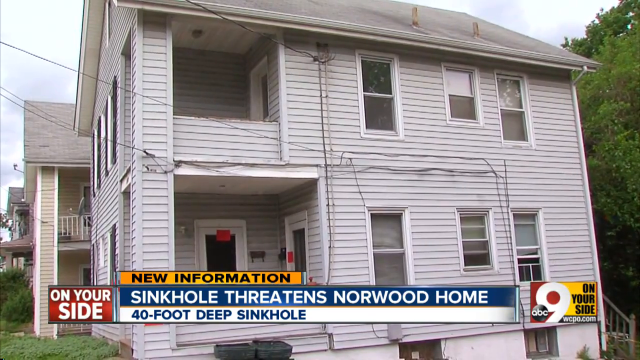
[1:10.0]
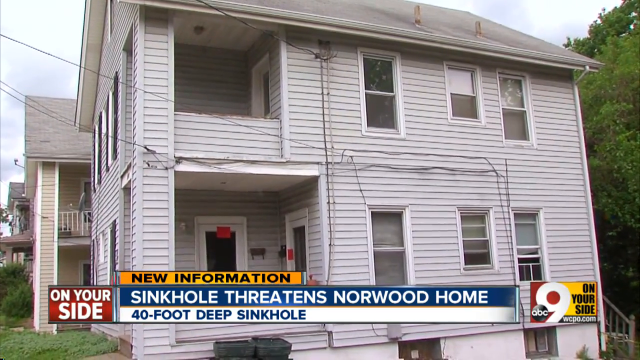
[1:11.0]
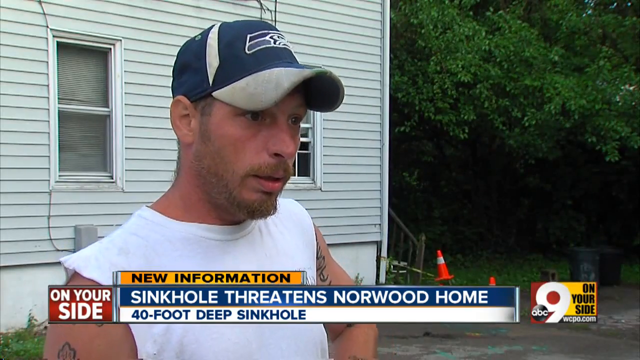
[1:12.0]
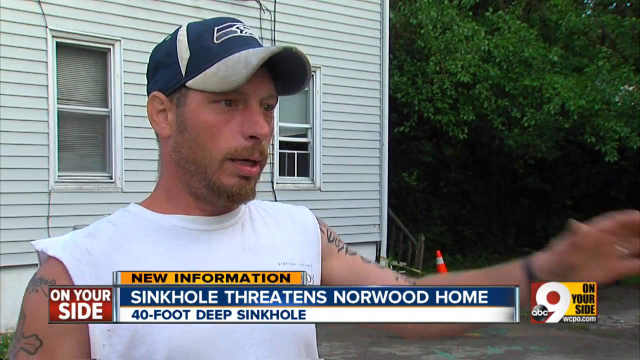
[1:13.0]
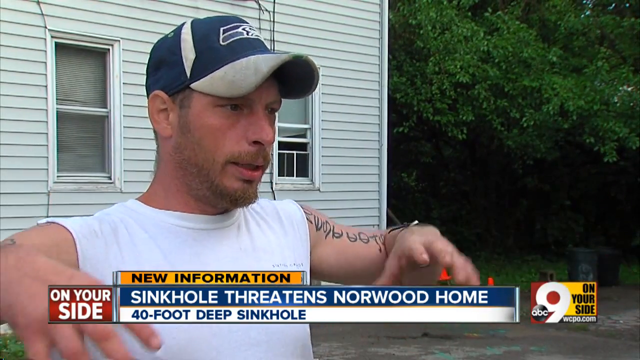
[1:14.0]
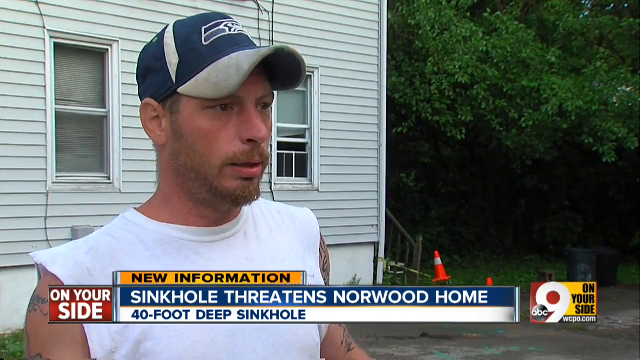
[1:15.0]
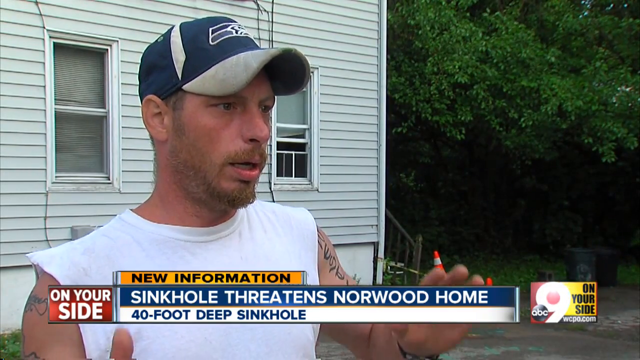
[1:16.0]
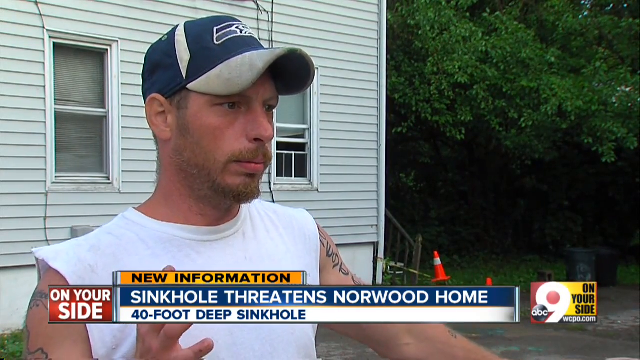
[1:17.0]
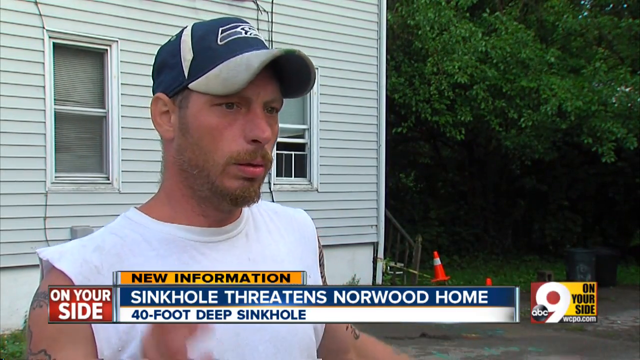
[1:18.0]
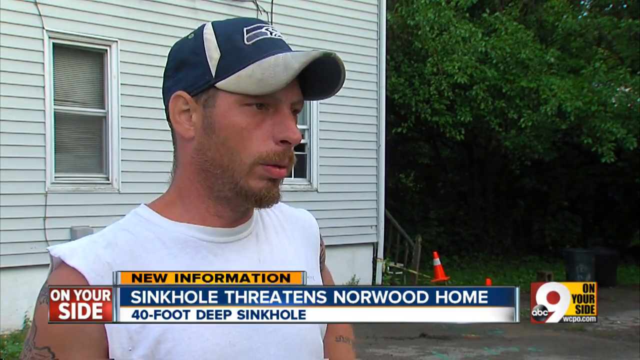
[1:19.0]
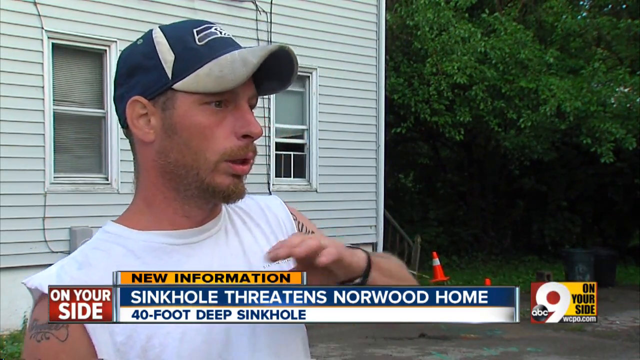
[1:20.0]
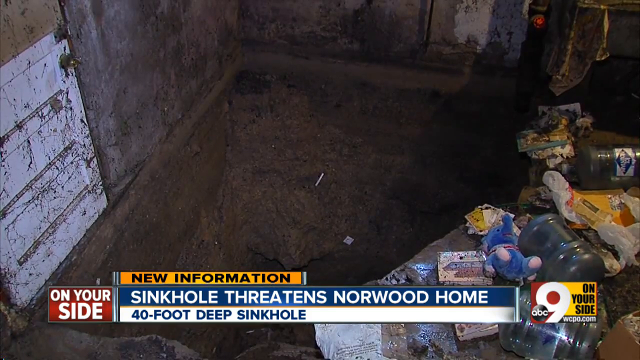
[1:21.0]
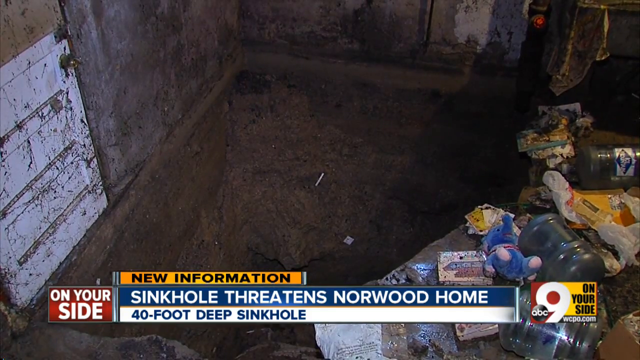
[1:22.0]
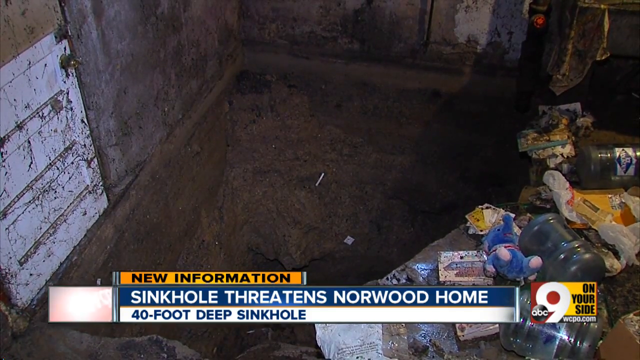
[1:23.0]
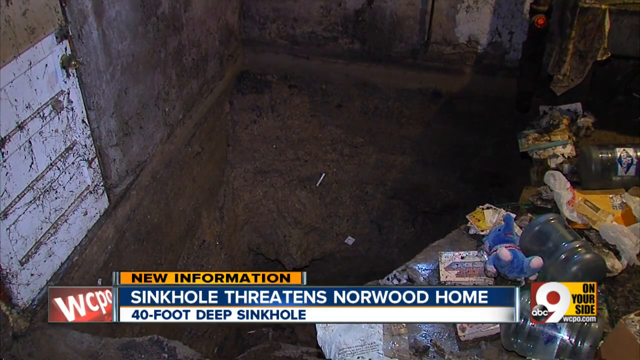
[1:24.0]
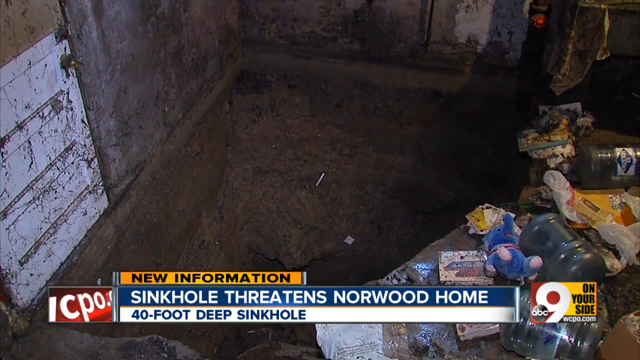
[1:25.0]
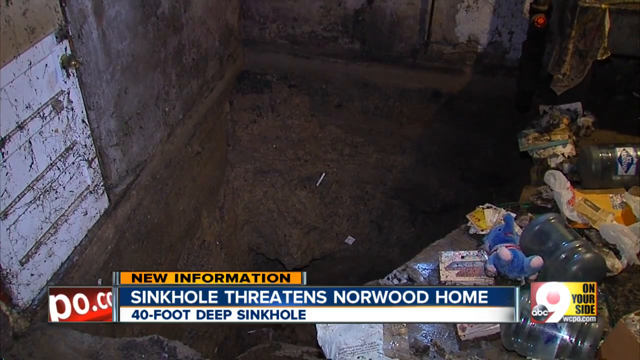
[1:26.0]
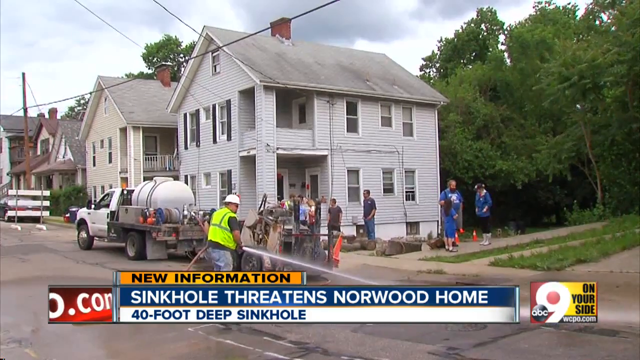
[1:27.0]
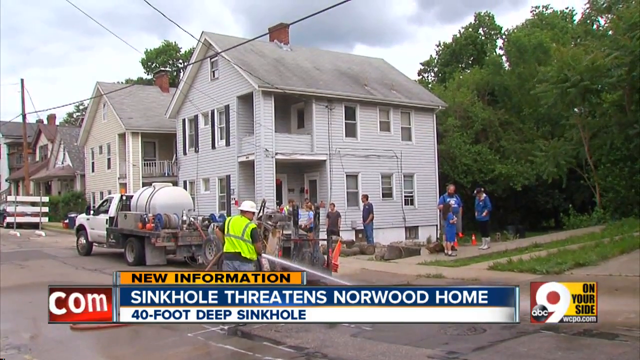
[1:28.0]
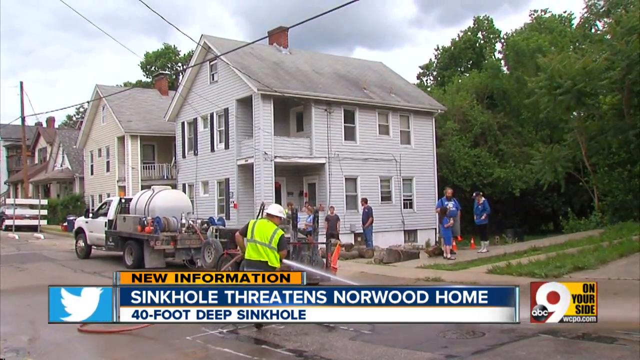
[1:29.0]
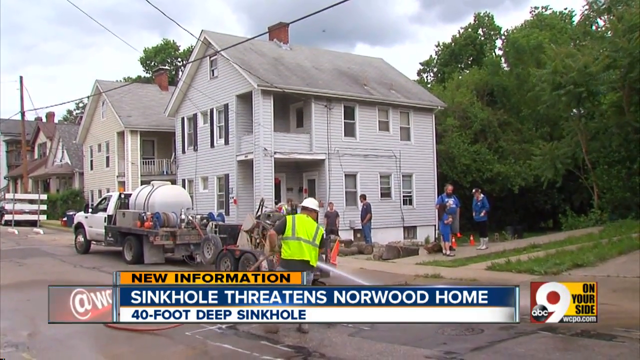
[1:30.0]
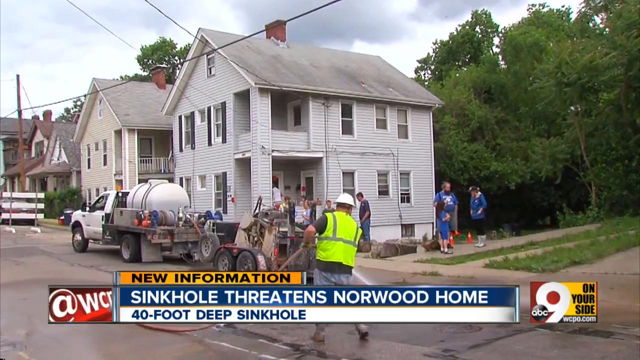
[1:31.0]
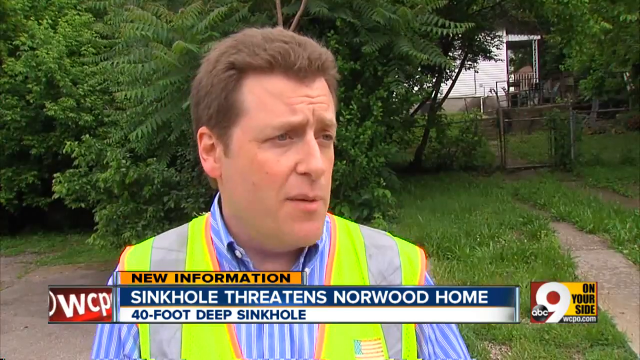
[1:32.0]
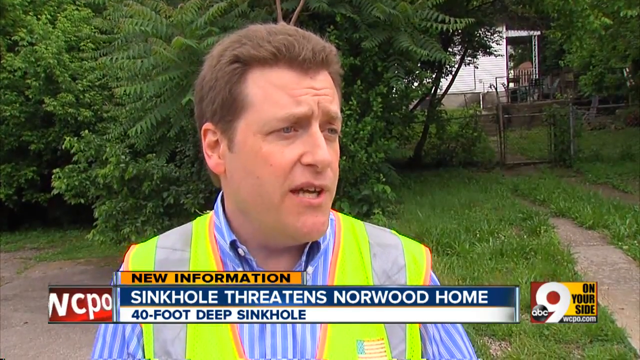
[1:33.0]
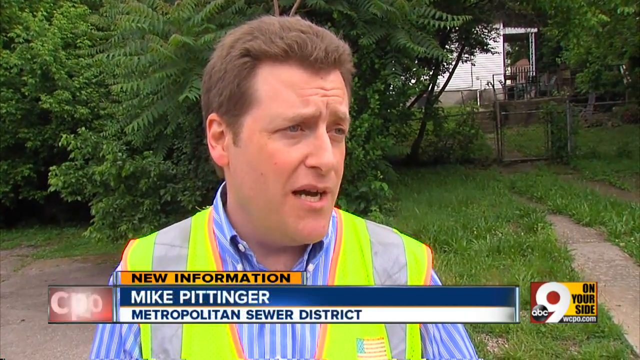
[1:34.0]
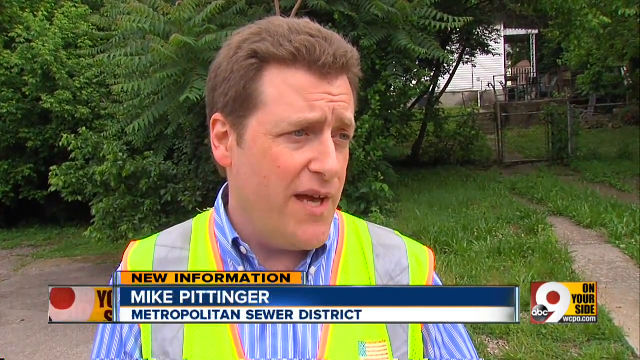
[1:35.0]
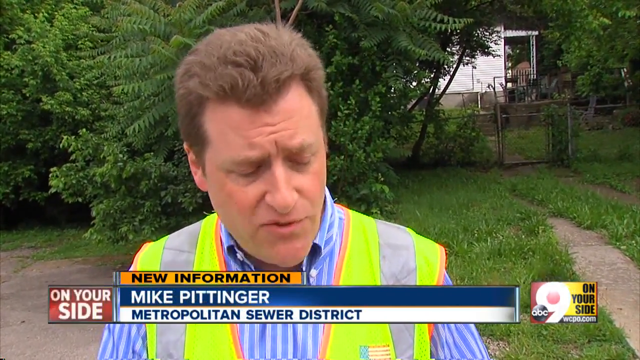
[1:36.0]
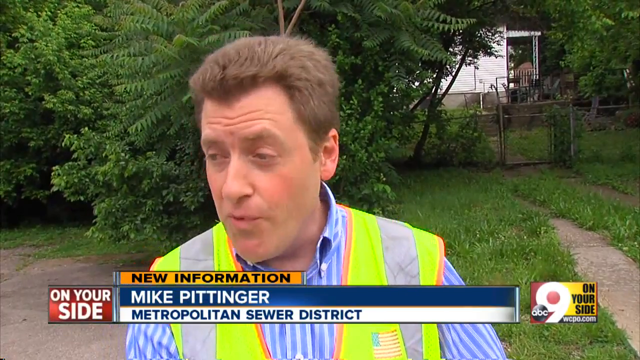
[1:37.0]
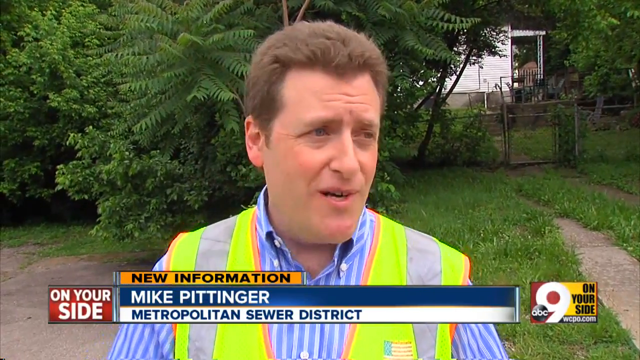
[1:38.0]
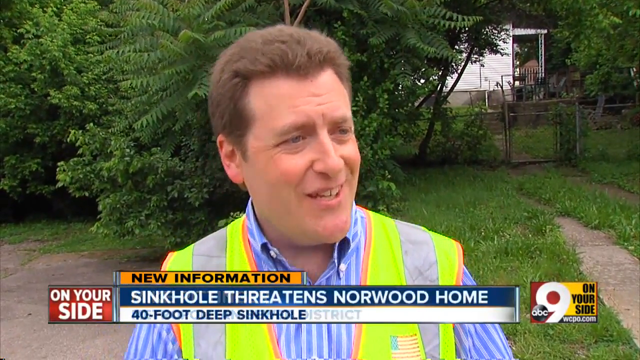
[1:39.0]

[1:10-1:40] The sinkhole is 40 feet and threatens the entire home. People are on the front porch, including a little dog playing with something and a woman sitting in a long chair with her legs crossed, looking casual; it is unclear whether she is the woman in the flannel shirt who approached the car. A man wears a hunting or sports team style baseball cap, and a black and white sign on the house reads "no trespassing." The caption says a sinkhole is threatening a Norwood home. The residents appear to be lower middle class. The caption then changes, and a man who looks exactly like the earlier one but wears a different baseball cap, with tattoos on his arm, motions with his hands while the caption describes a "40 foot deep sinkhole."